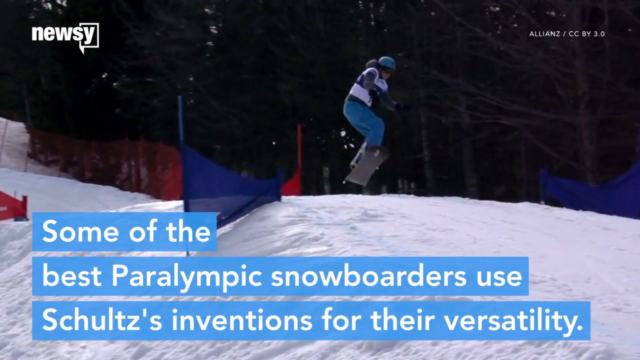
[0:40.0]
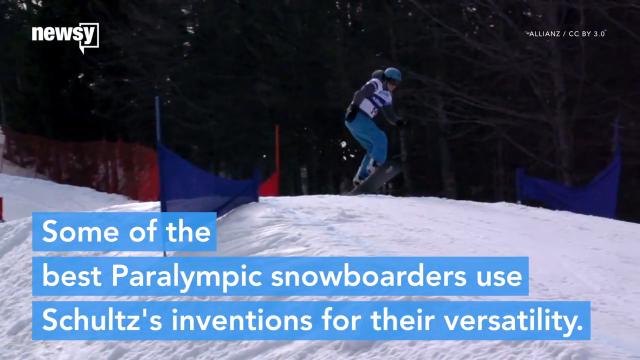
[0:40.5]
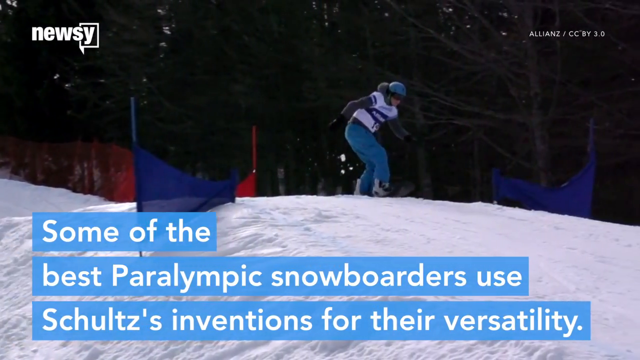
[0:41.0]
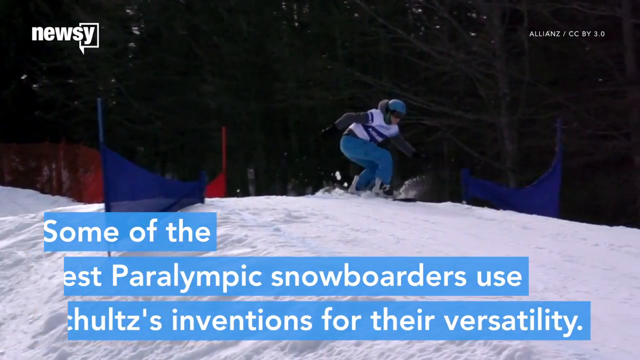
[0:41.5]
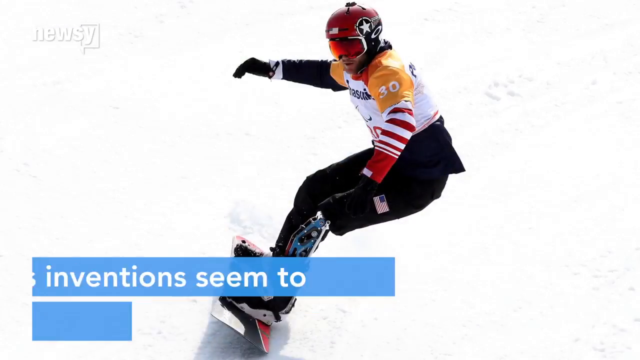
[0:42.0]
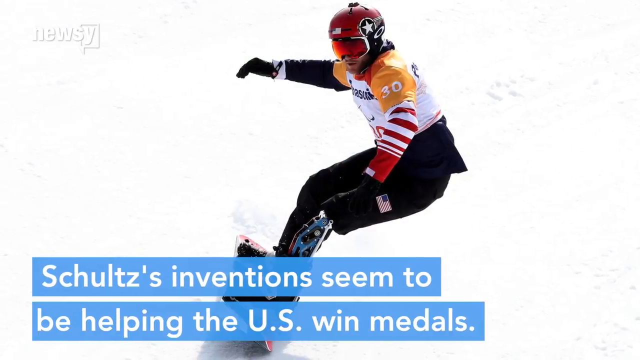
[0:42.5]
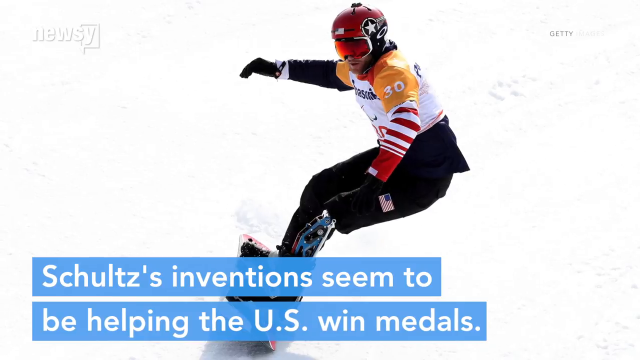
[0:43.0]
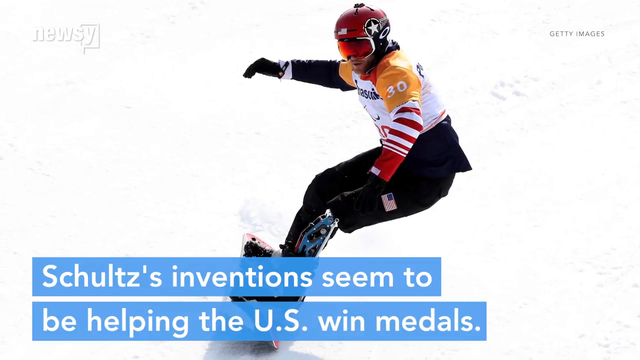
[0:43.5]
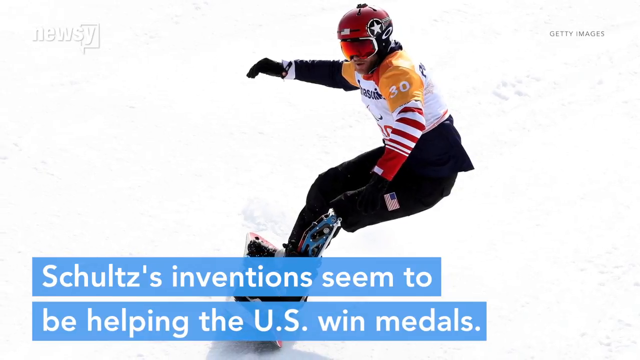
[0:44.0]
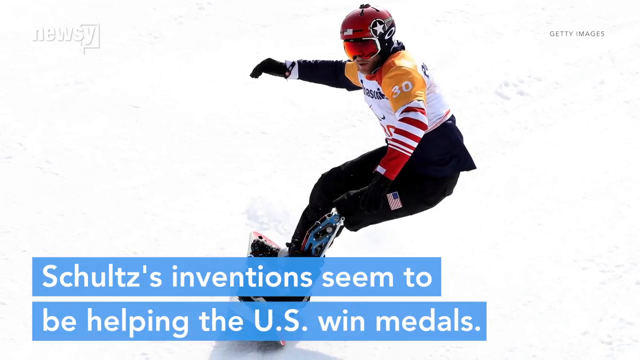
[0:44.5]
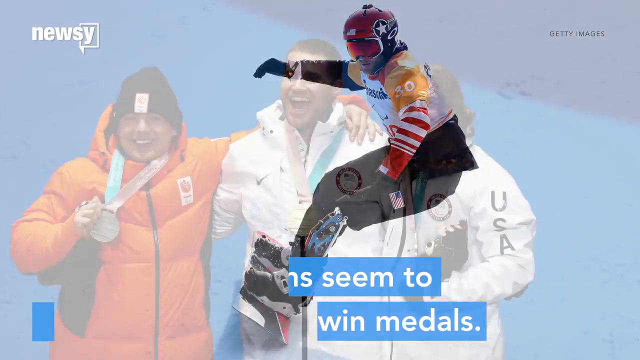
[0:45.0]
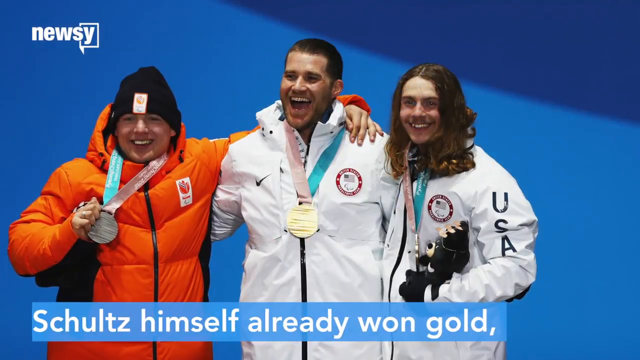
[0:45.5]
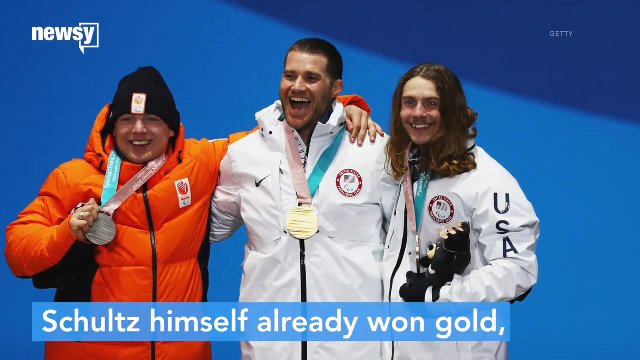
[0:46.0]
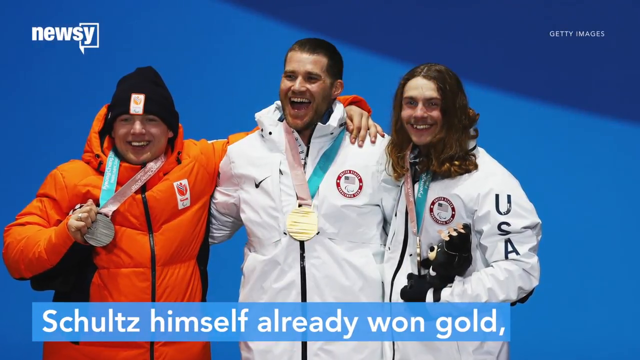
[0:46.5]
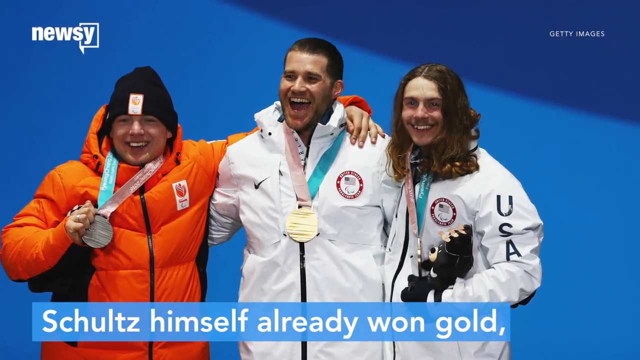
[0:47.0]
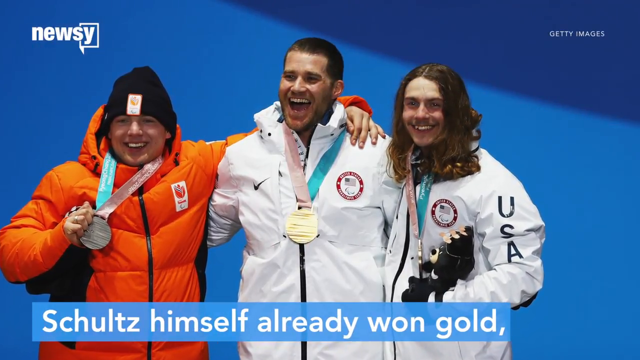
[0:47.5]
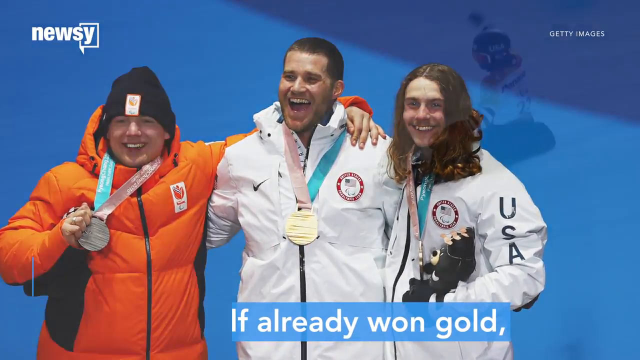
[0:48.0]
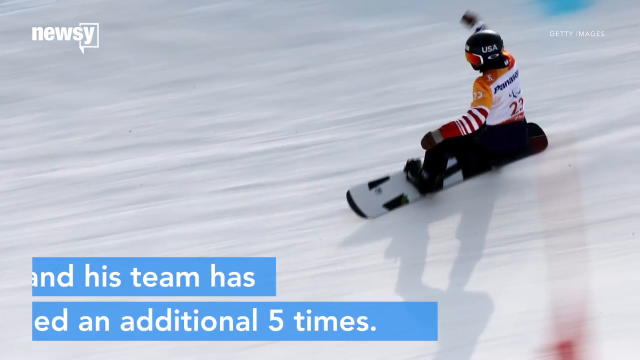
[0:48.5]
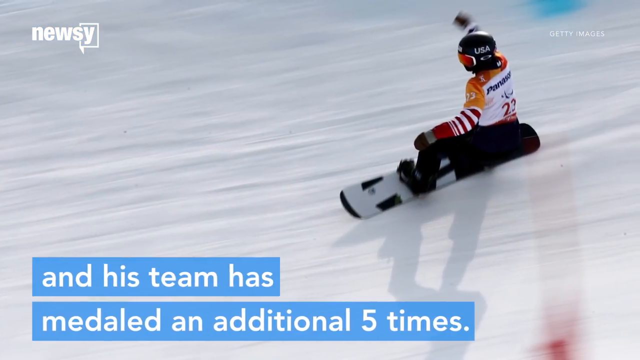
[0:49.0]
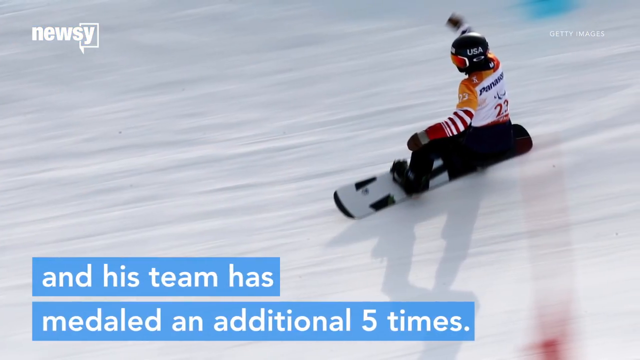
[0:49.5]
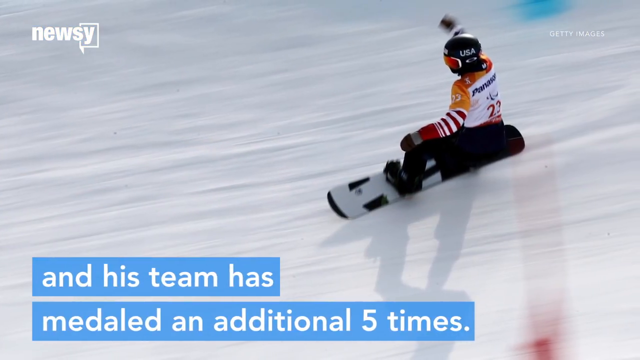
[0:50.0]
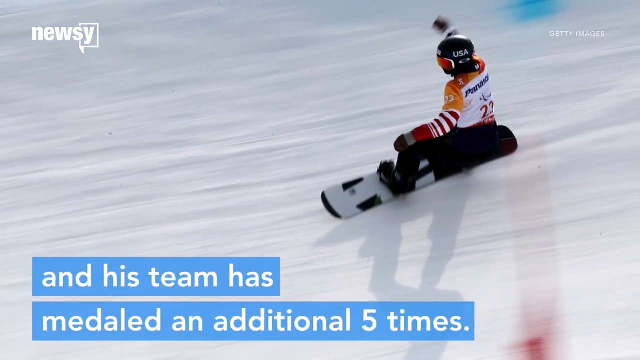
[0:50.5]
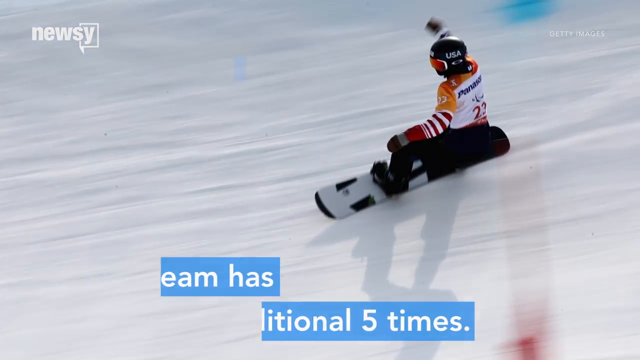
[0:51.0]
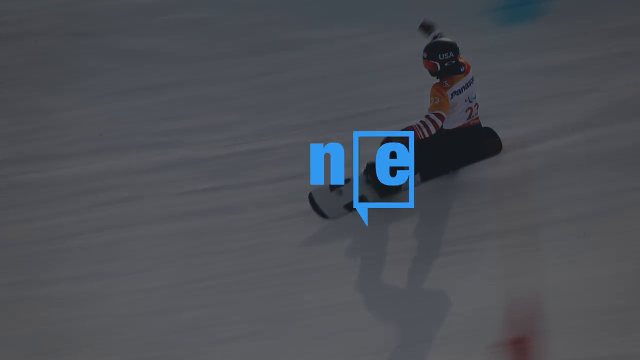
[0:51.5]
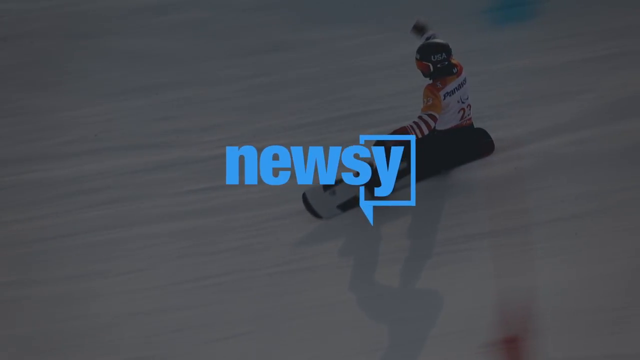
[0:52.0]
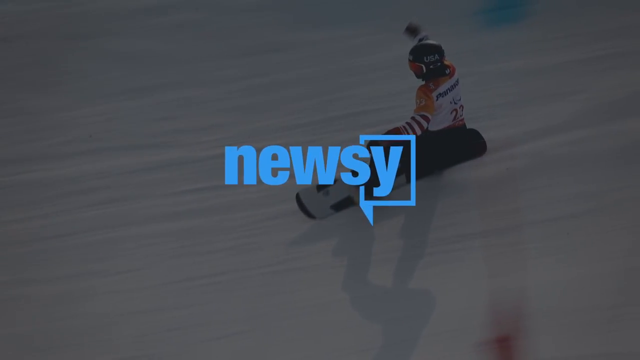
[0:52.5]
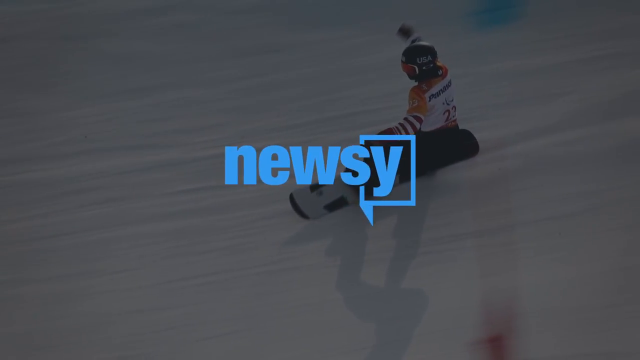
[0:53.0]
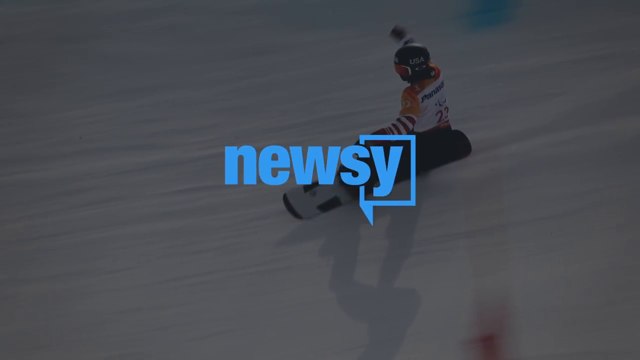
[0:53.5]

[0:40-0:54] The NewsY emblem is at the top left, a white watermark spelled N-E-W-S-Y. The video shows Paralympic star snowboarder Mike Schultz, with text at the bottom reading "Some of the best Paralympic snowboarders used Schultz's invention for their versatility." Further text reads "Schultz's invention seemed to be helping the U.S. win medals." and "Schultz himself already won gold. and his team has medaled an additional five times."